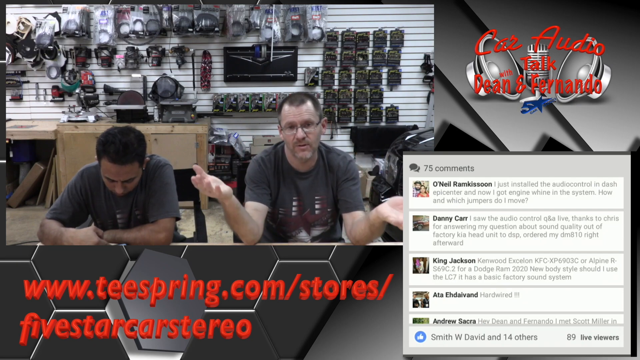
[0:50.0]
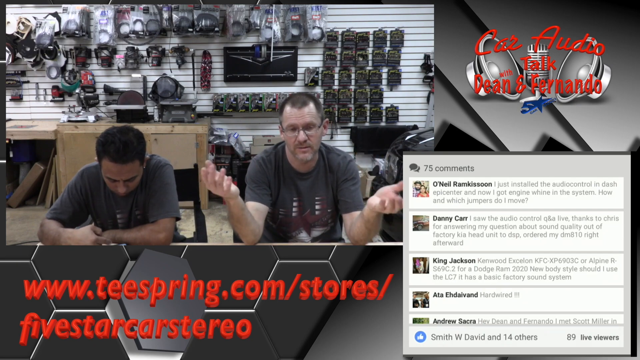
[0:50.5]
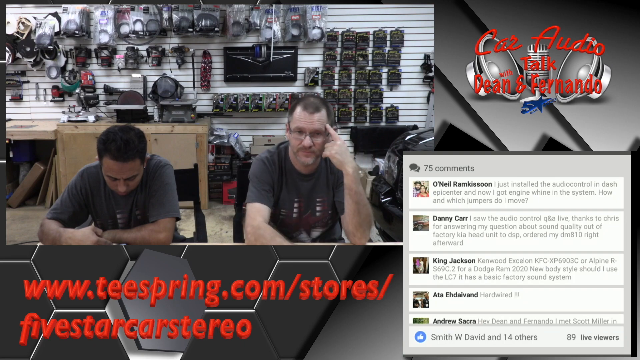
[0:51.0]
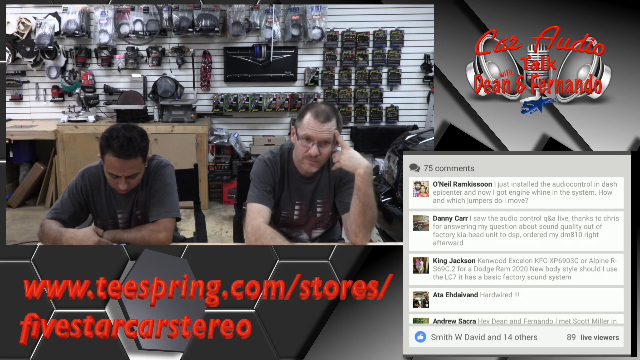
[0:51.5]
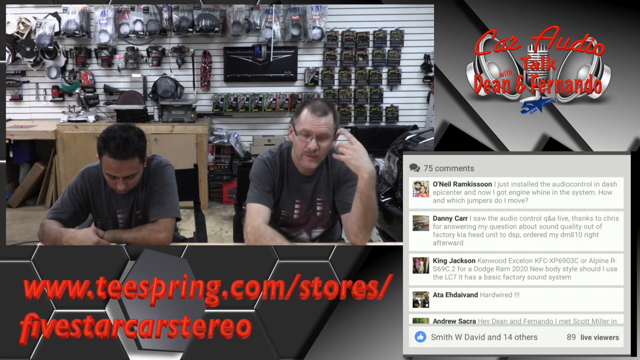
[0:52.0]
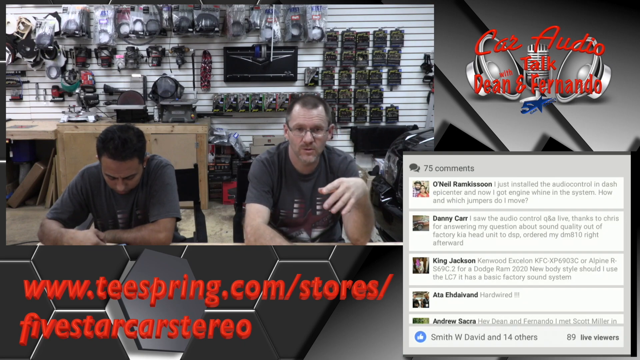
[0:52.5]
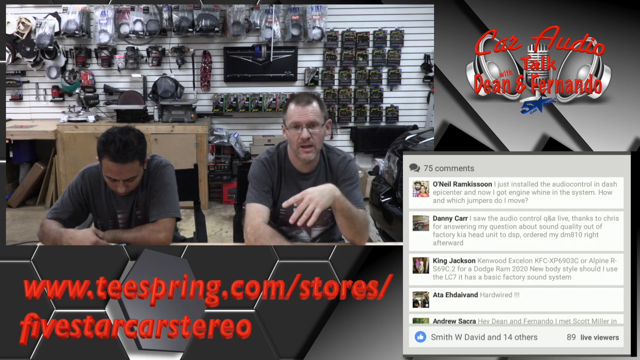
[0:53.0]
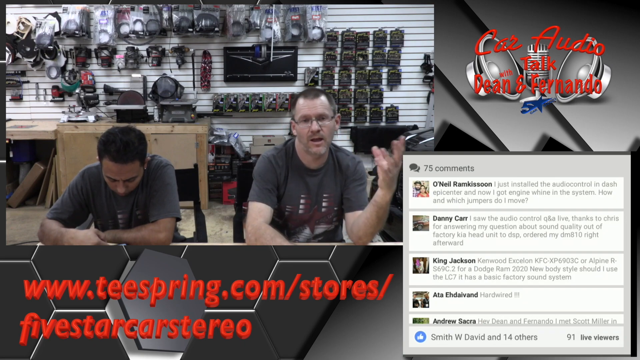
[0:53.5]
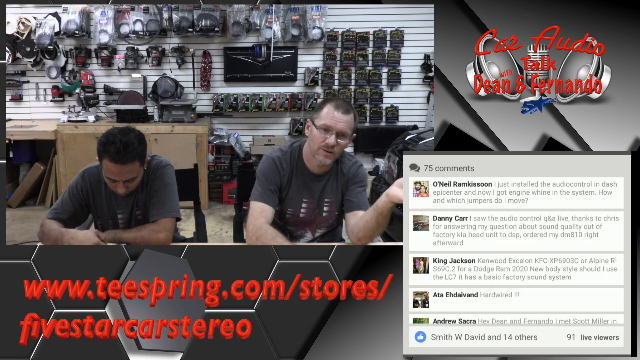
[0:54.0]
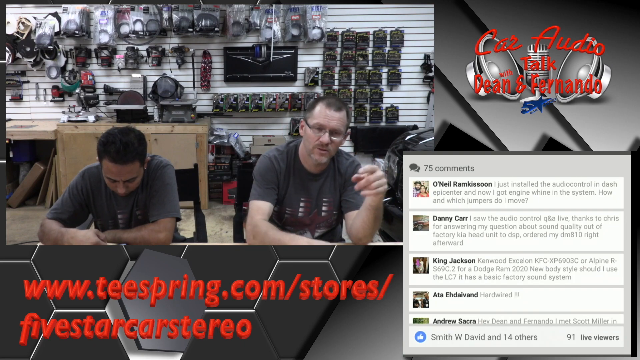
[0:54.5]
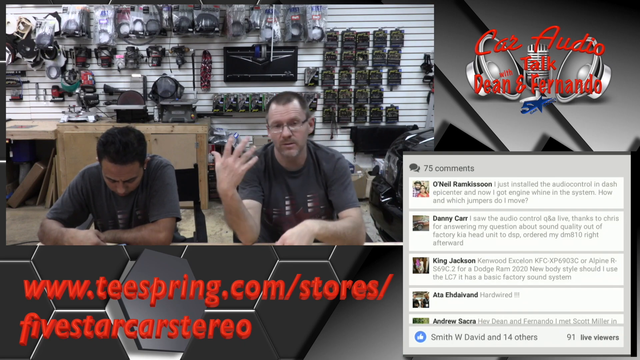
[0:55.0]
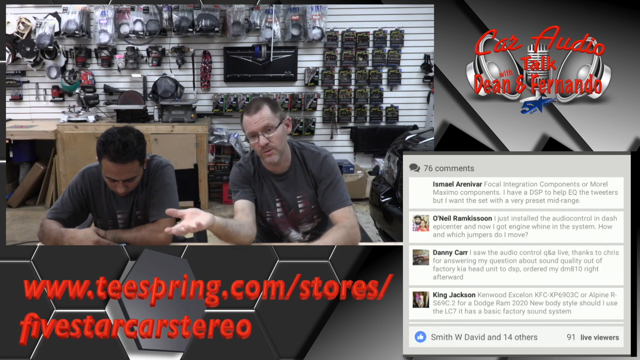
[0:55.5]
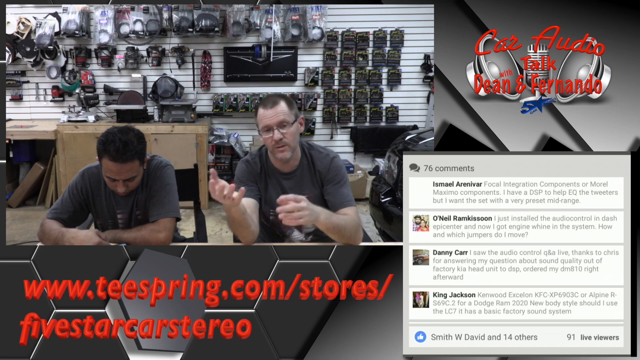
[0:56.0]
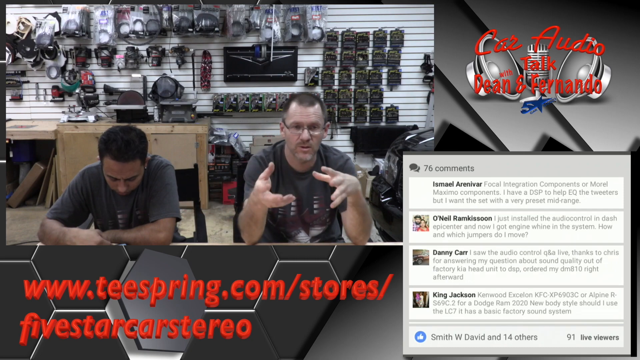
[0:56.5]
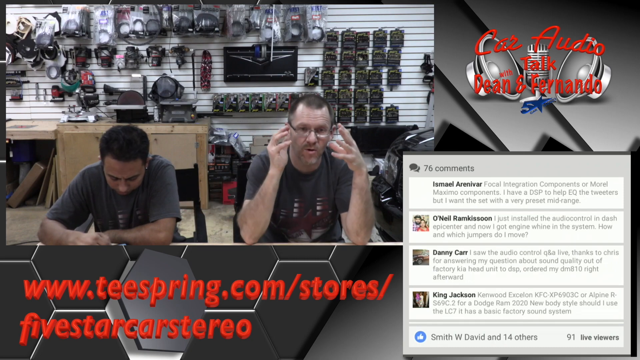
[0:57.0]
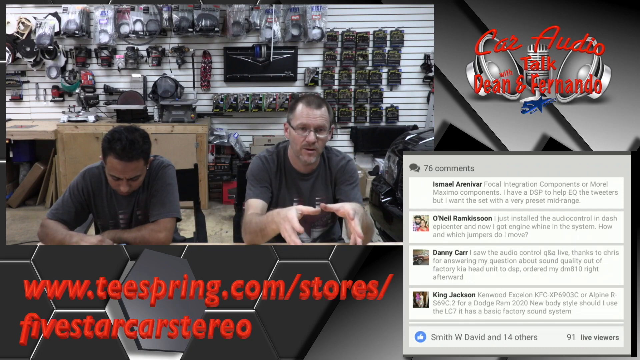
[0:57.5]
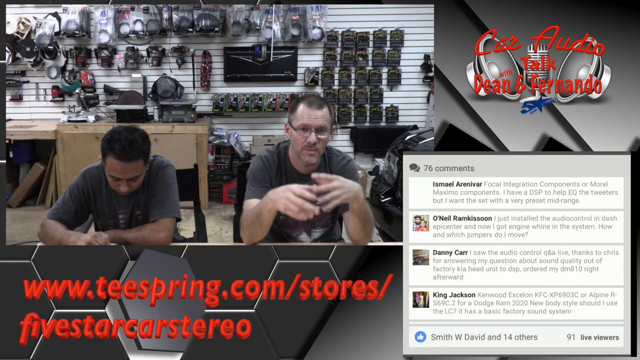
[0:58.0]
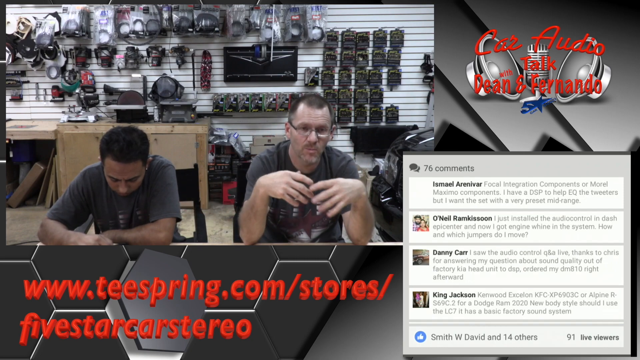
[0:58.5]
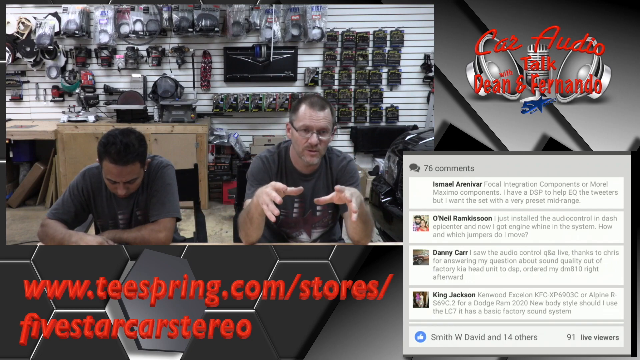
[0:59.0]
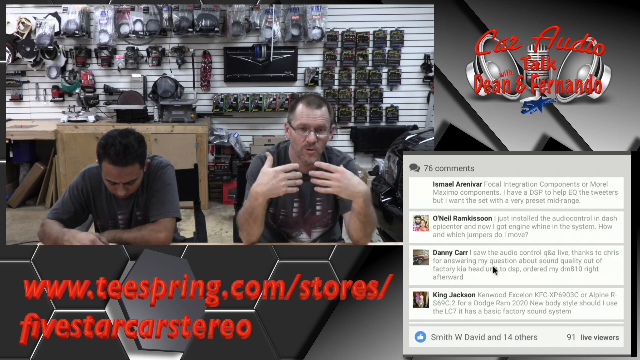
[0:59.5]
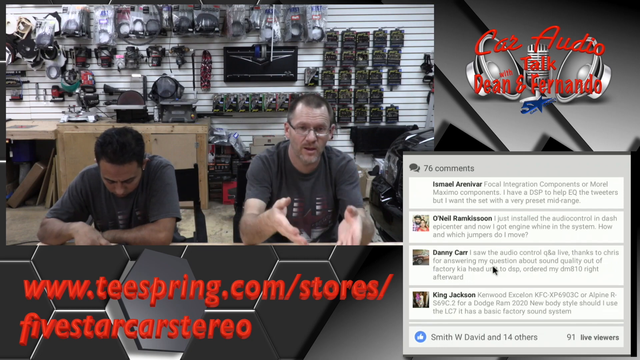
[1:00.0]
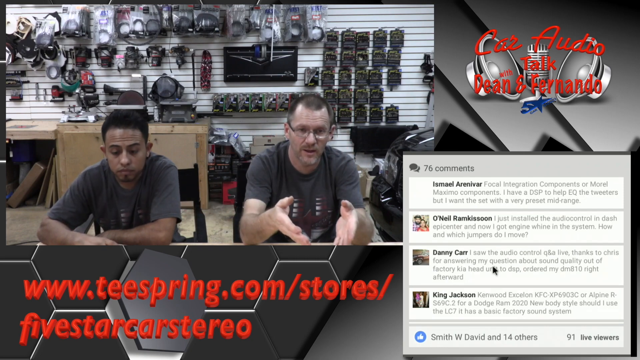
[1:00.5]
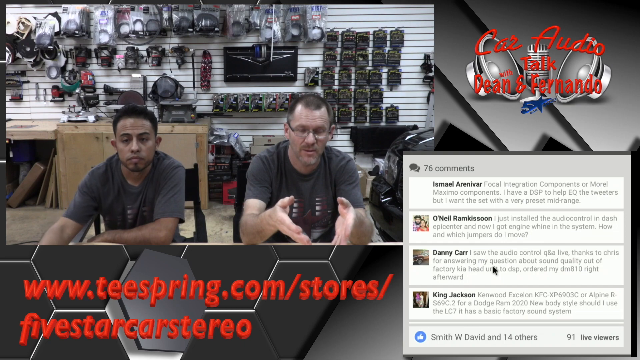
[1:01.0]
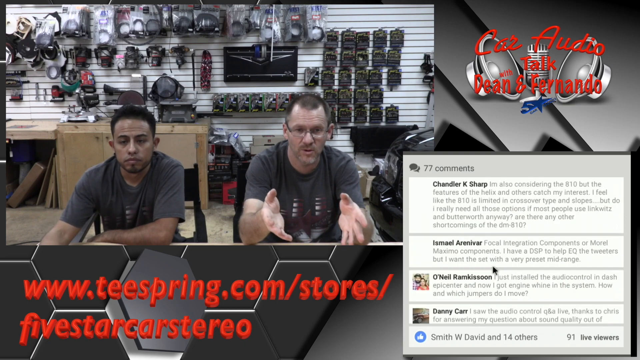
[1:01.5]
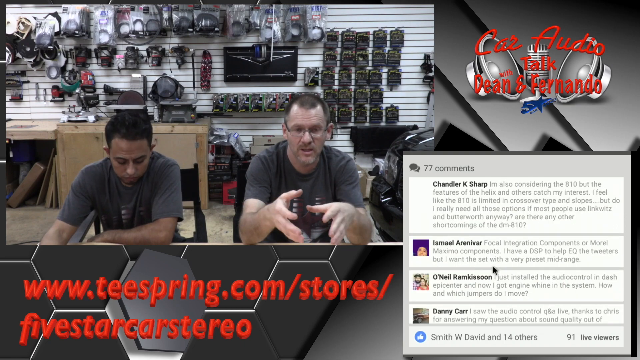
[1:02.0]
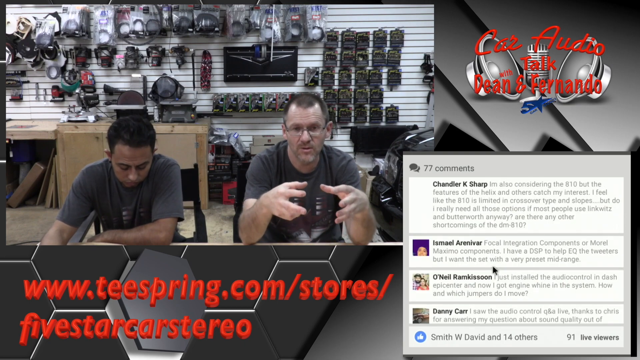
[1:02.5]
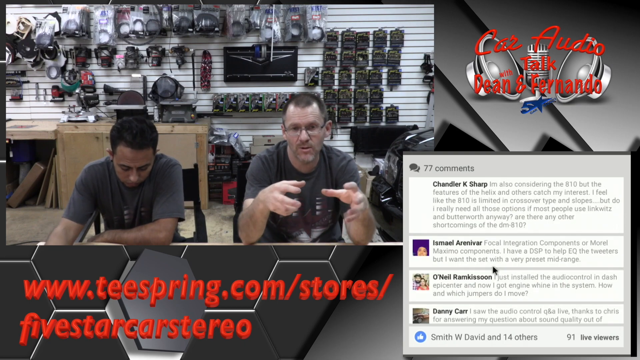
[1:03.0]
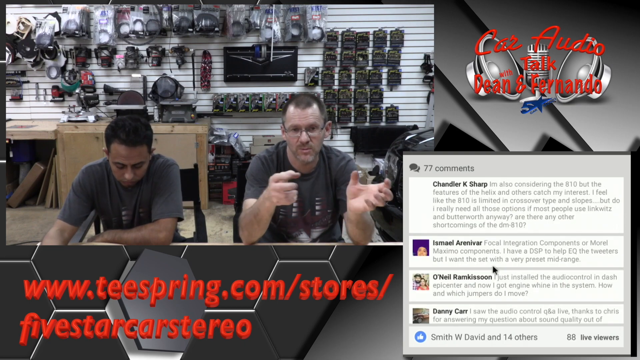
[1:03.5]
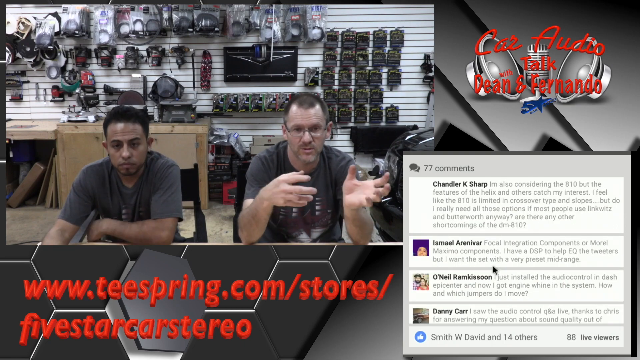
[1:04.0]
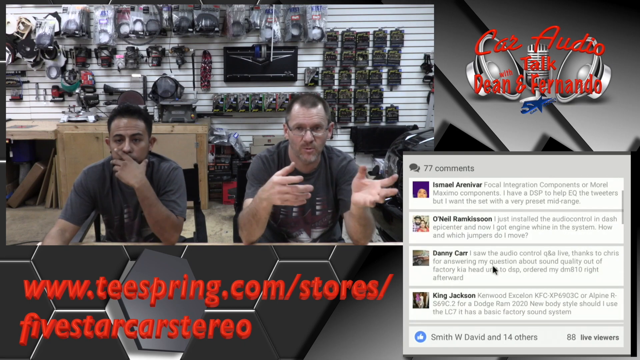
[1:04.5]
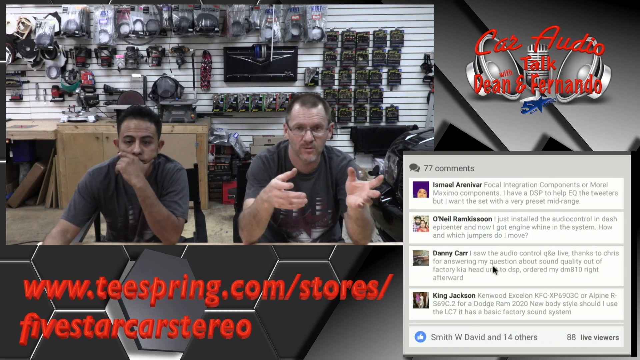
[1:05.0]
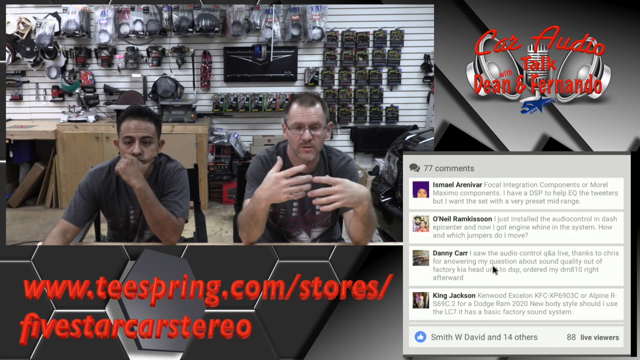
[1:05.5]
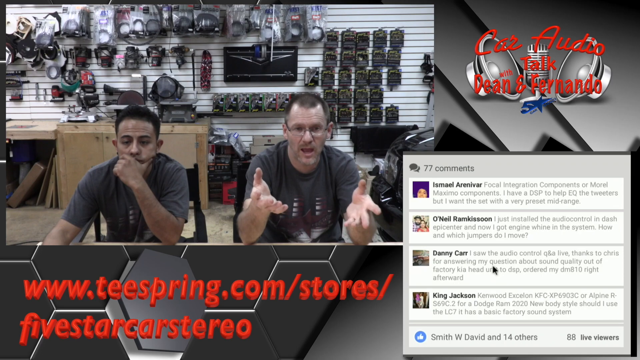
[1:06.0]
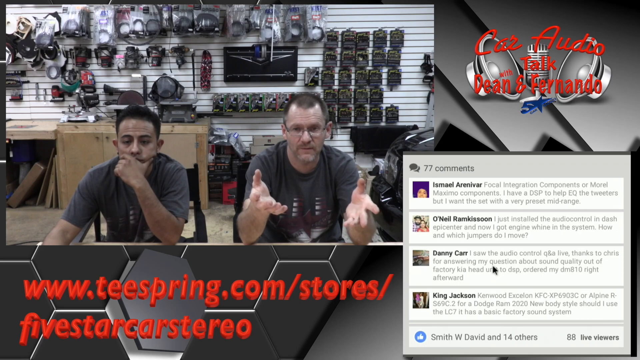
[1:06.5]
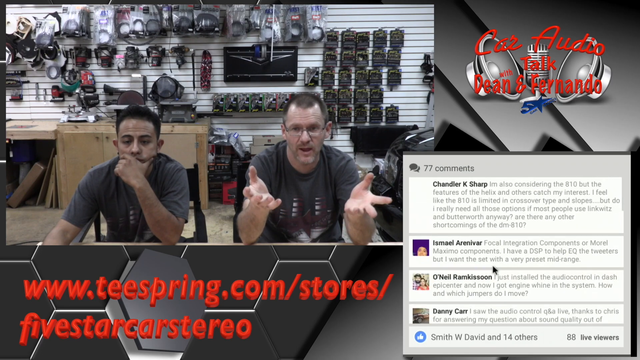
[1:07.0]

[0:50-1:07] The video looks like a stream format. A large rectangle at the top left shows a feed of two men sitting and talking toward the camera, in front of a table at the bottom of the feed. Behind them is a white wall with many goods hanging from it. There appears to be a workbench at the bottom left of the background, with a grinder, a saw and other things, and the background looks like a workshop. At the bottom left of the frame, red text reads "www.tspring.com/store/five star car stereo". At the top right, red text reads "car audio talk with Dean and Fernando". At the bottom right there appears to be a chat interface reading "75 comments" at its top left, with many white rectangles containing black usernames and gray text. The two men face the camera: apparently a Hispanic man on the left and a white man on the right, both wearing gray T-shirts and sitting down. The man on the left looks downward and appears to scroll through a phone, looking at the comments in the feed. The white man on the right keeps talking with his elbows on the table, gesturing and waving his left and right hands back and to the left and right. The man on the left finally raises his head, puts his left hand around his mouth in a thinking gesture and looks forward as if at a monitor, while the white man keeps talking toward the camera. It seems to be a stream of a talk show, with the man on the left doing most of the technical work and the white man doing most of the talking.